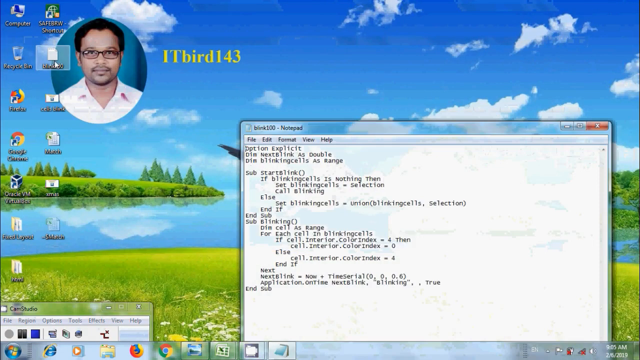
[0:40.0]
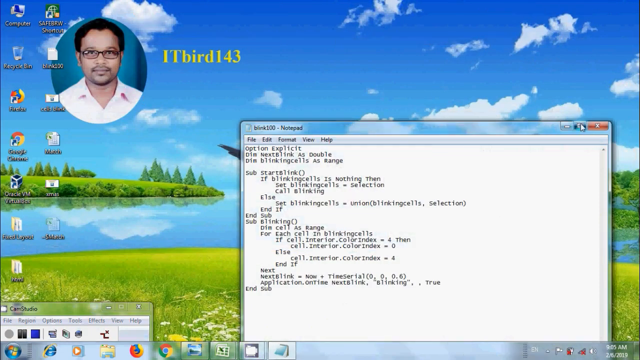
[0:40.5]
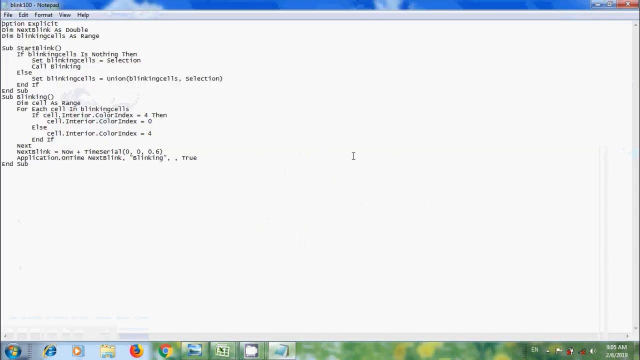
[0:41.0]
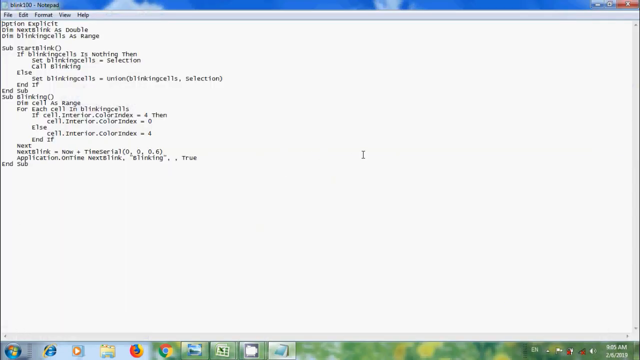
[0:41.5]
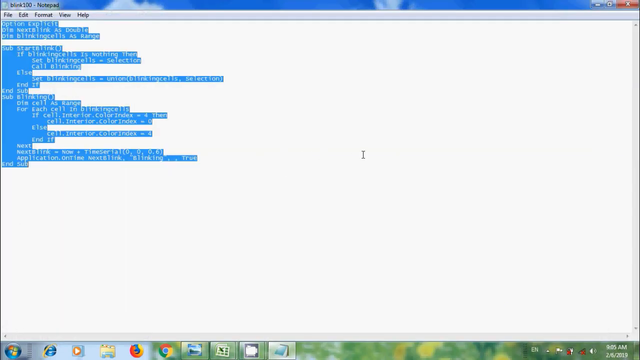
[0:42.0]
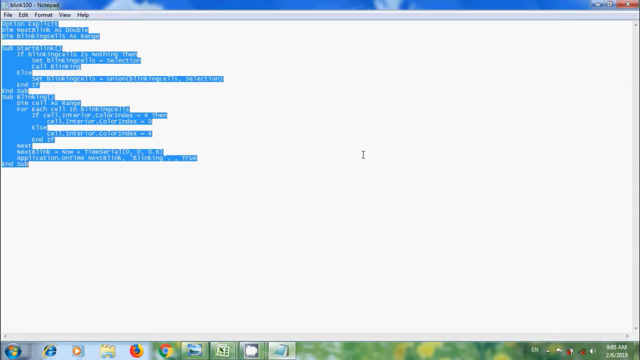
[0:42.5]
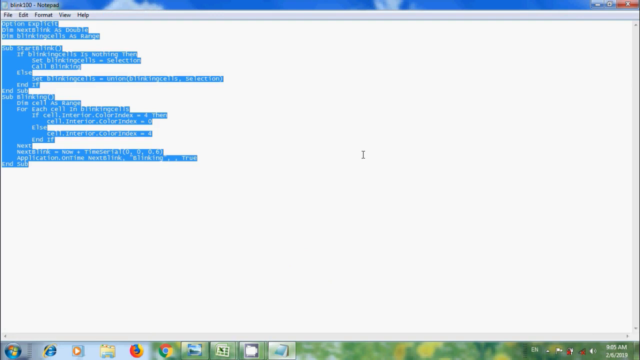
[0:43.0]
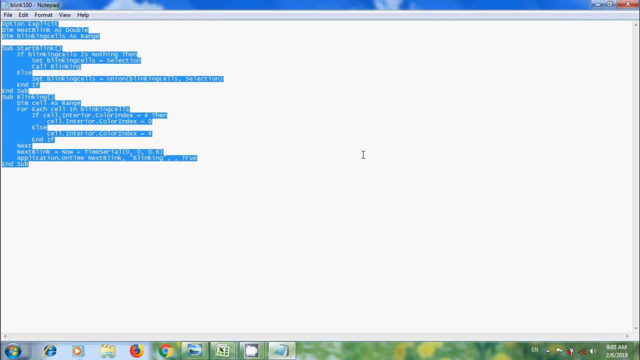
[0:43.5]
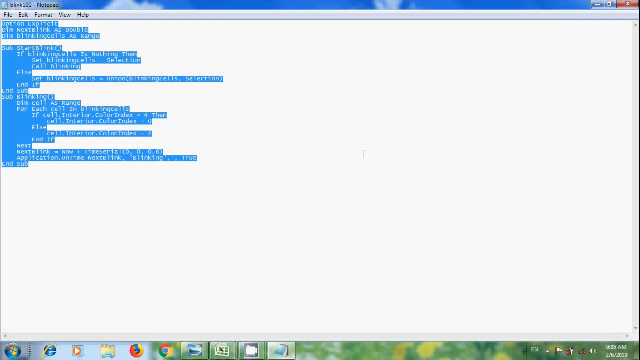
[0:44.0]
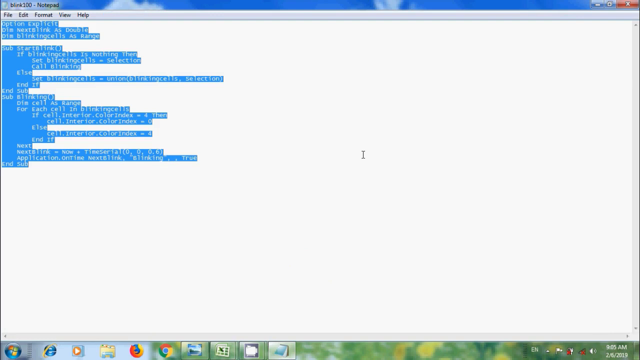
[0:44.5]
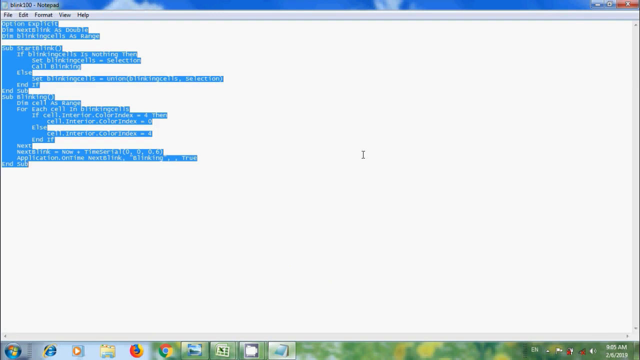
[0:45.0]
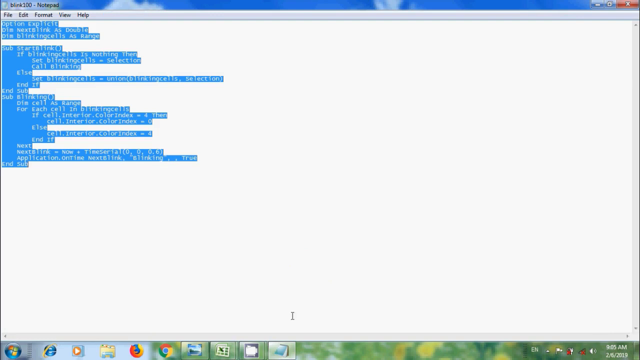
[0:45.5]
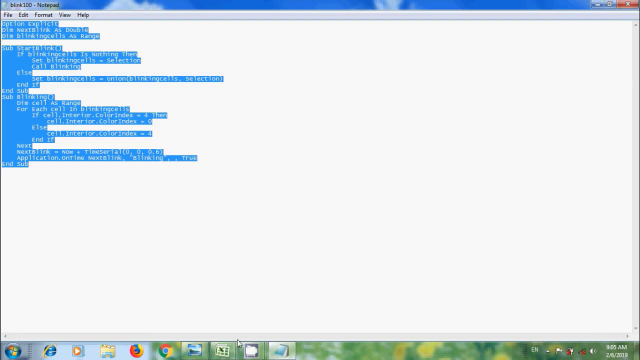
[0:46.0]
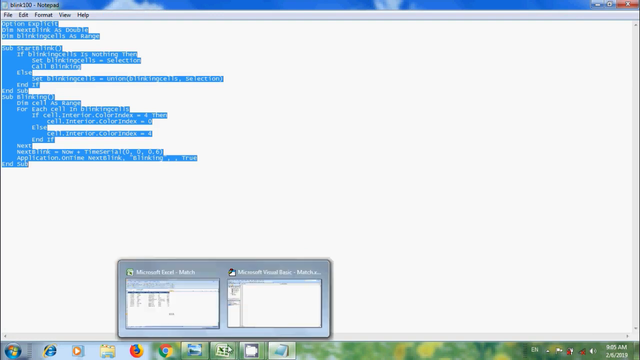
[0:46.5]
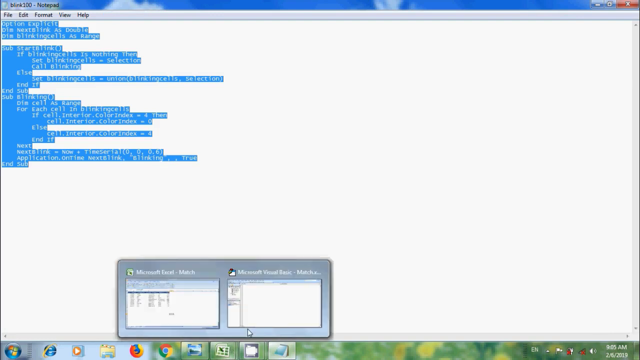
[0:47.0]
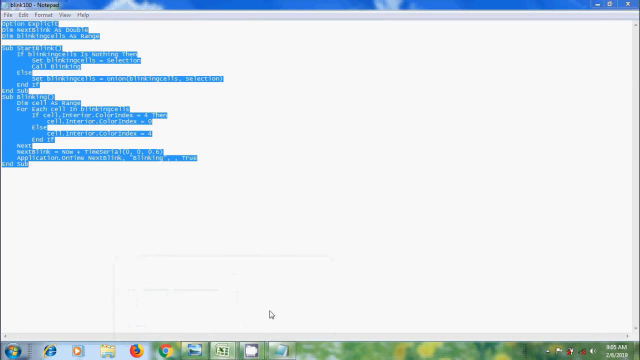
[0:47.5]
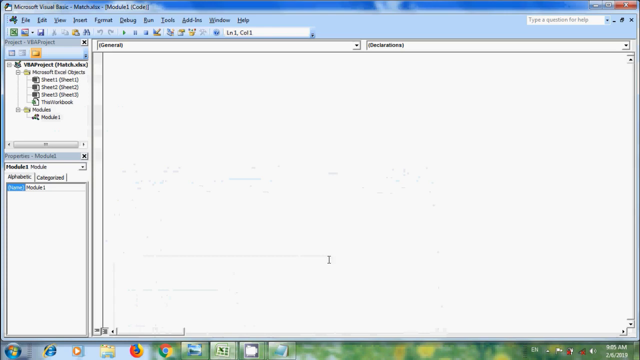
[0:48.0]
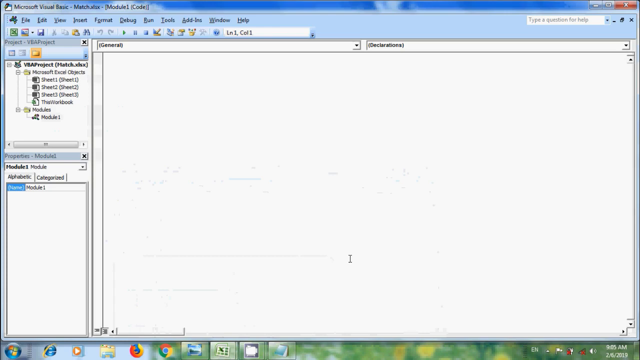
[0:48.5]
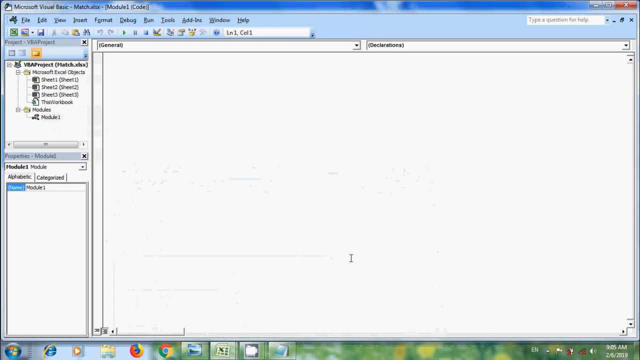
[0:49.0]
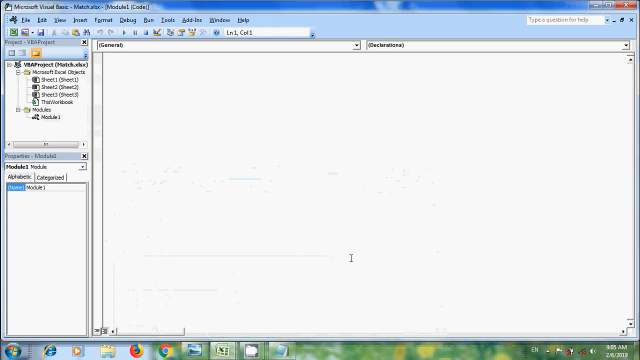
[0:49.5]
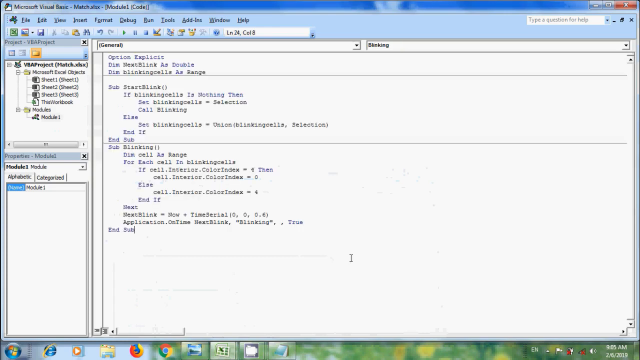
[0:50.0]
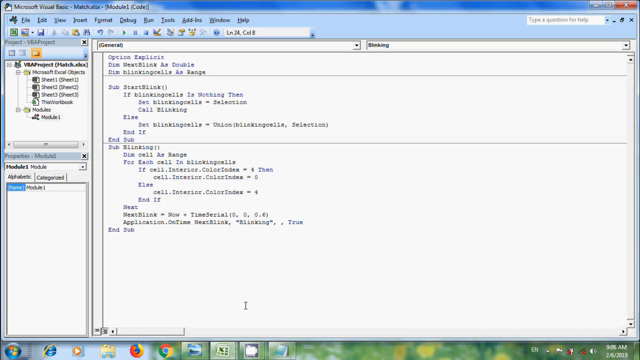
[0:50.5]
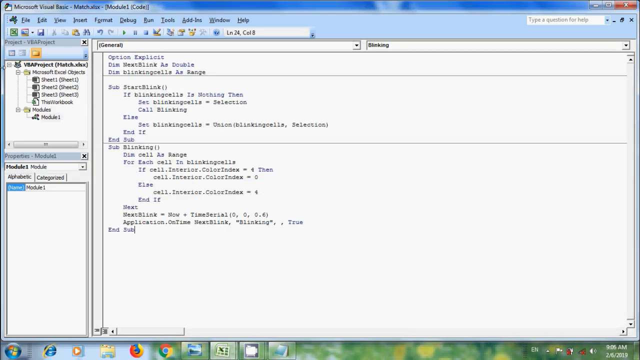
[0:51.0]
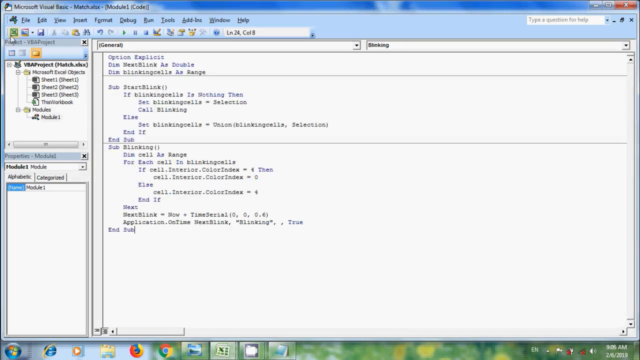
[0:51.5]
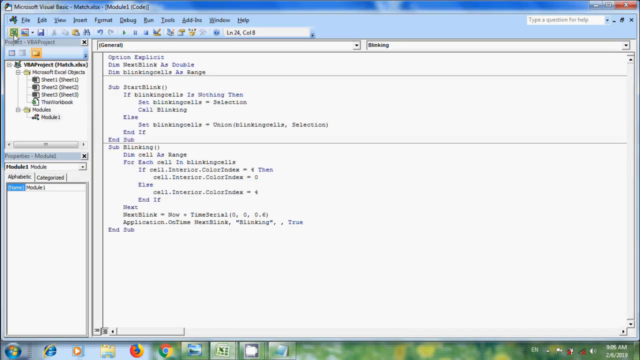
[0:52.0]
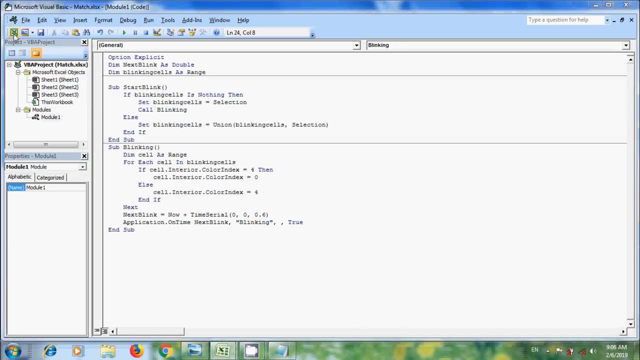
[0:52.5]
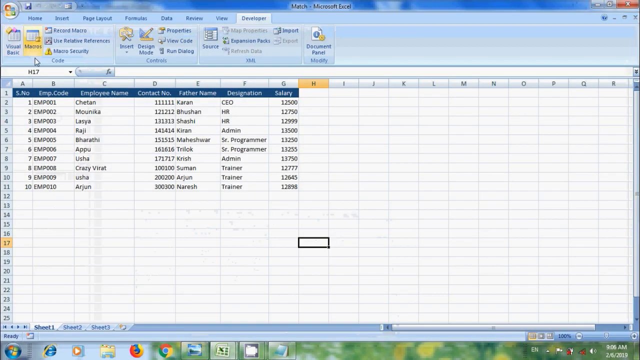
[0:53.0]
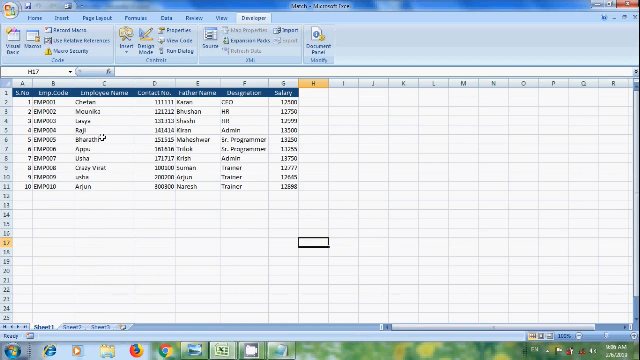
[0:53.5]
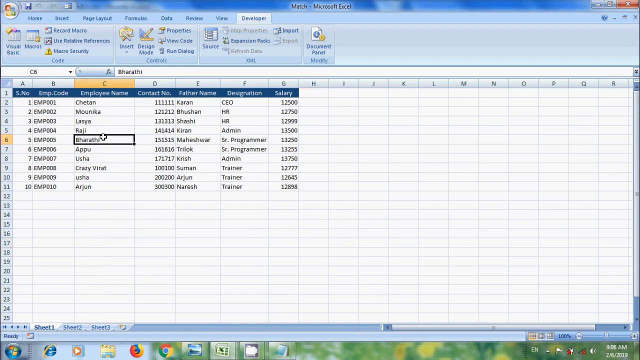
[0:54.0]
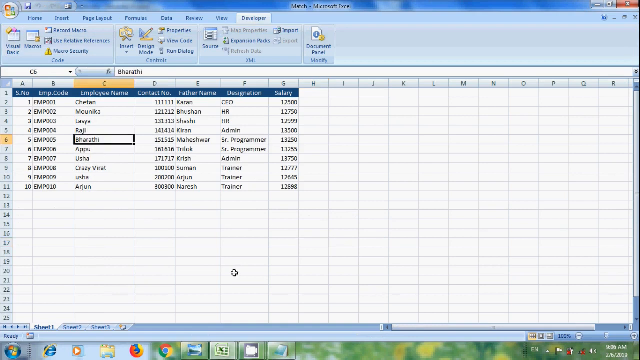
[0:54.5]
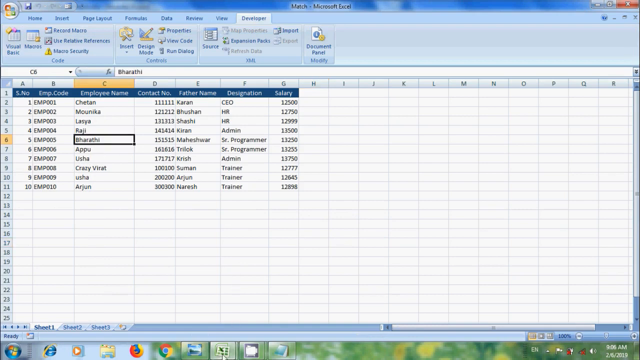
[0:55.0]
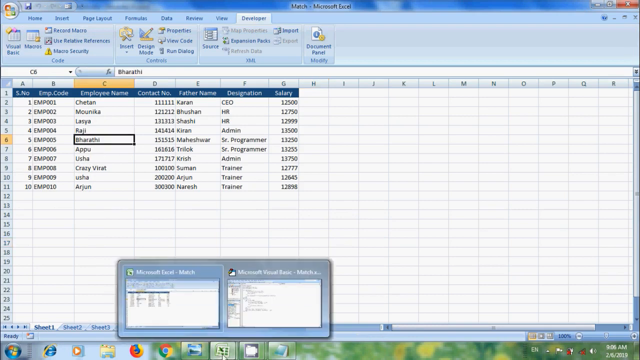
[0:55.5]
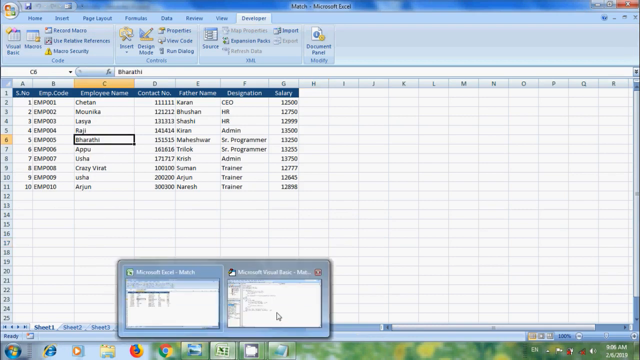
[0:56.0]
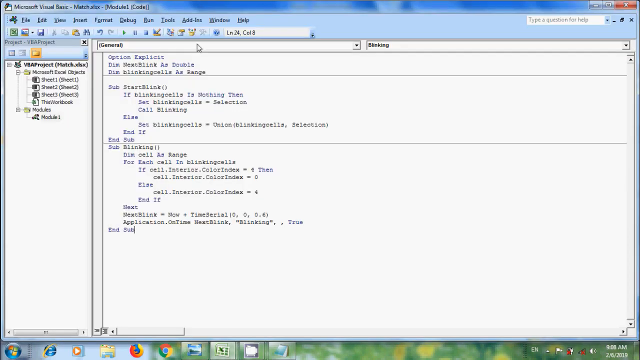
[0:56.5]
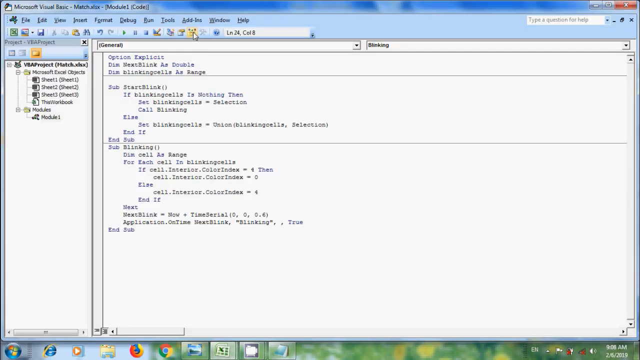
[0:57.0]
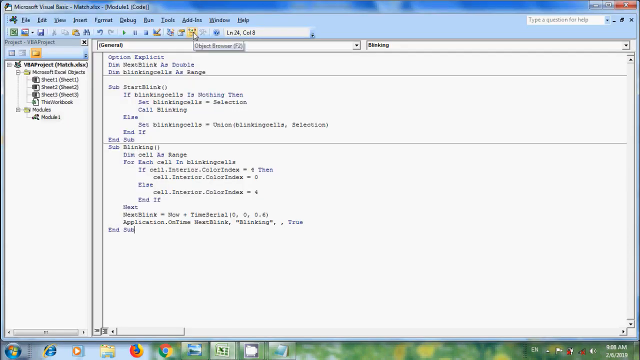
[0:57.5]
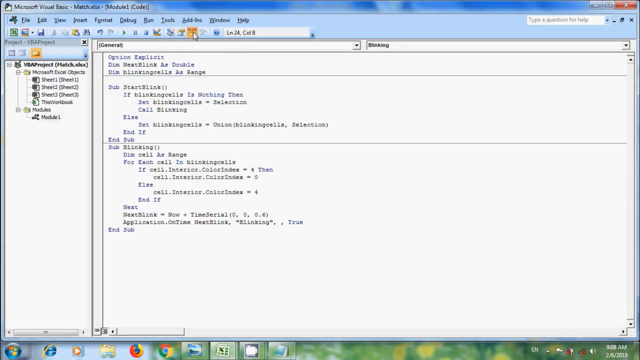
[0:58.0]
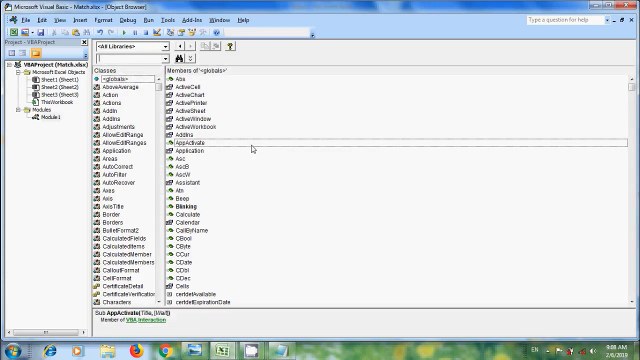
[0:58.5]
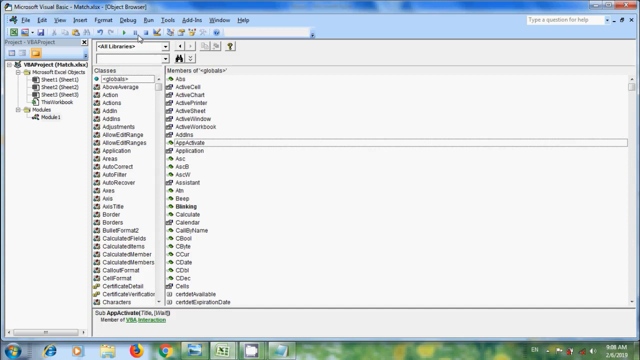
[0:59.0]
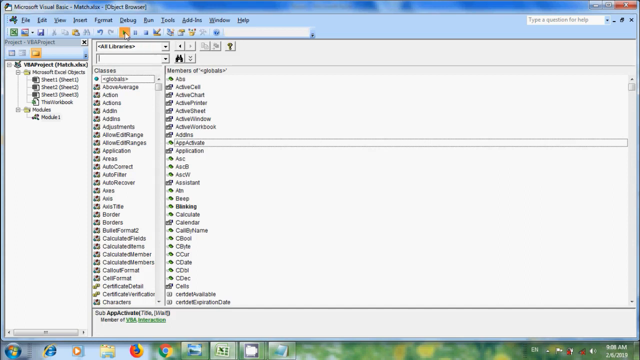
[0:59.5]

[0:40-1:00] The video moves from Microsoft Excel to the notes and then comes back to Microsoft Excel.